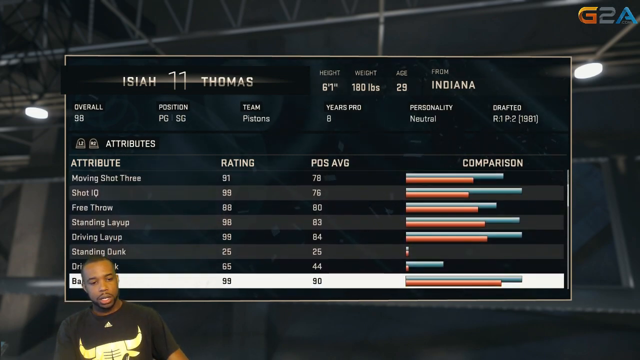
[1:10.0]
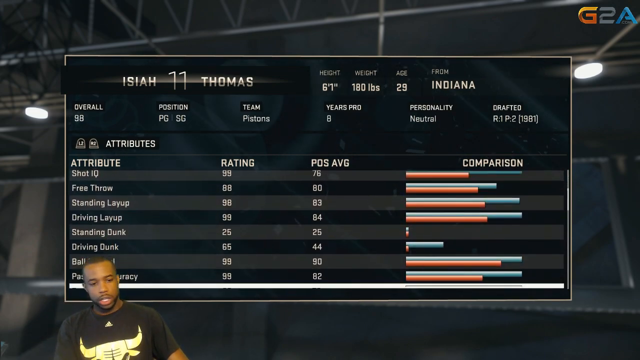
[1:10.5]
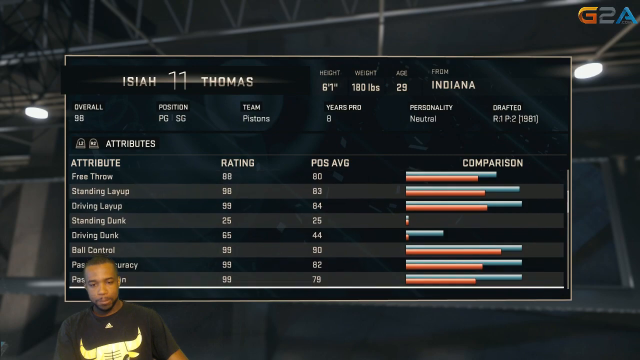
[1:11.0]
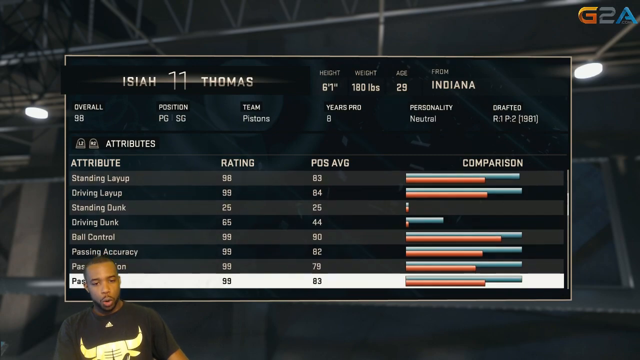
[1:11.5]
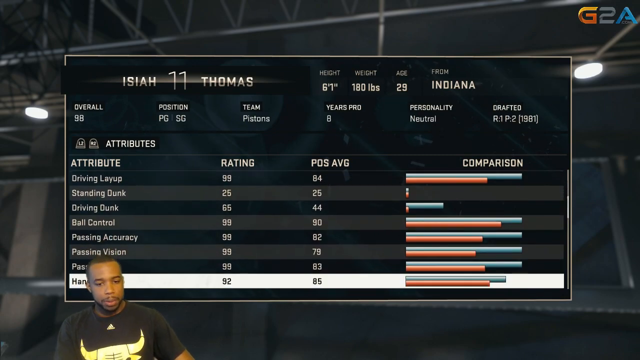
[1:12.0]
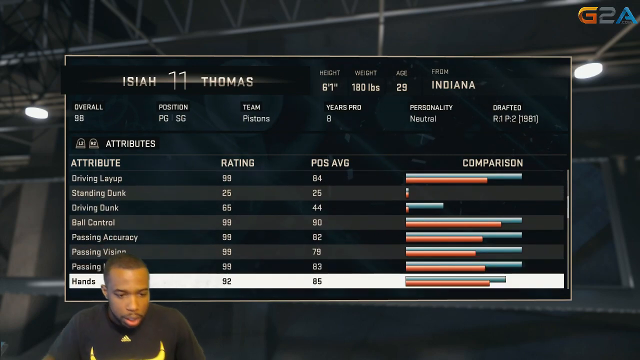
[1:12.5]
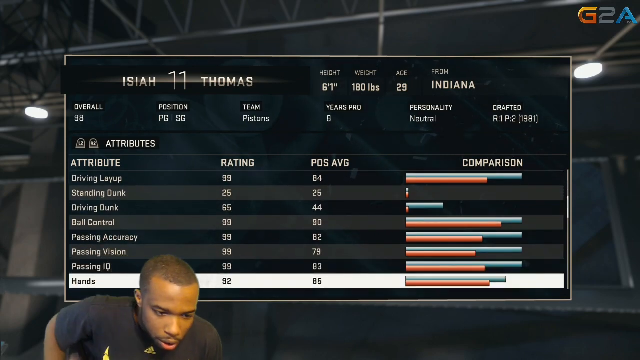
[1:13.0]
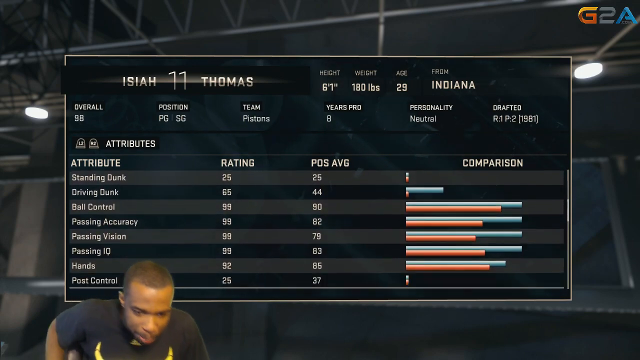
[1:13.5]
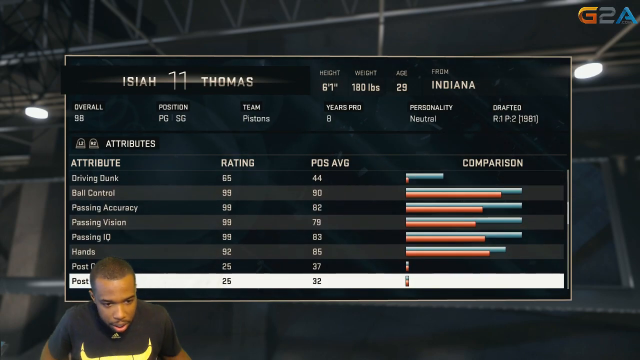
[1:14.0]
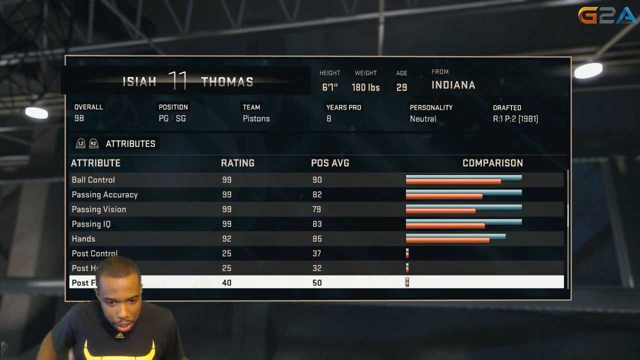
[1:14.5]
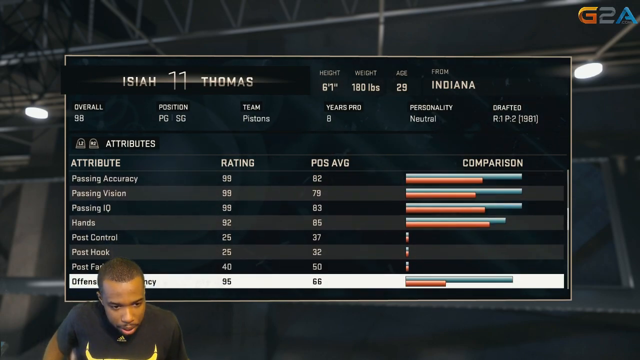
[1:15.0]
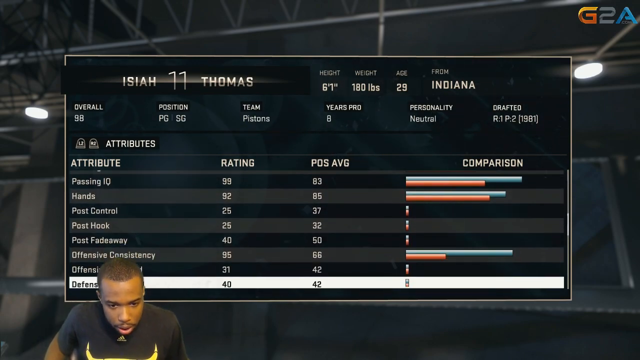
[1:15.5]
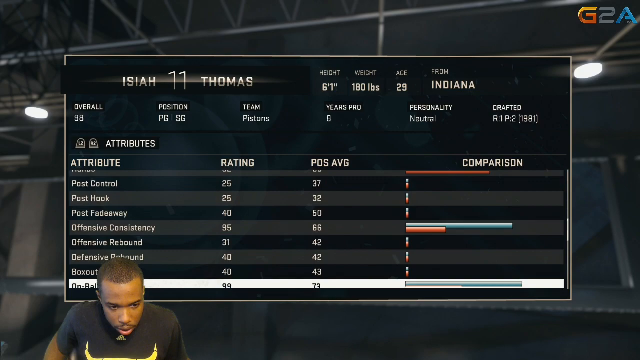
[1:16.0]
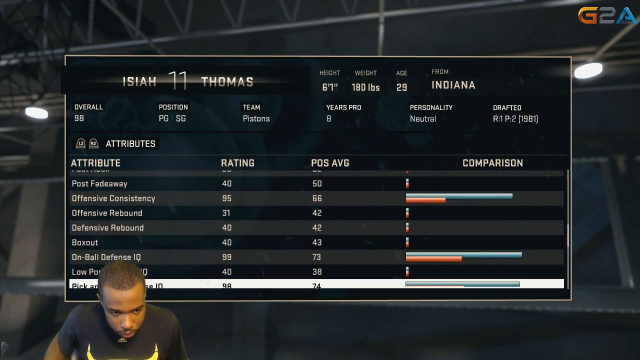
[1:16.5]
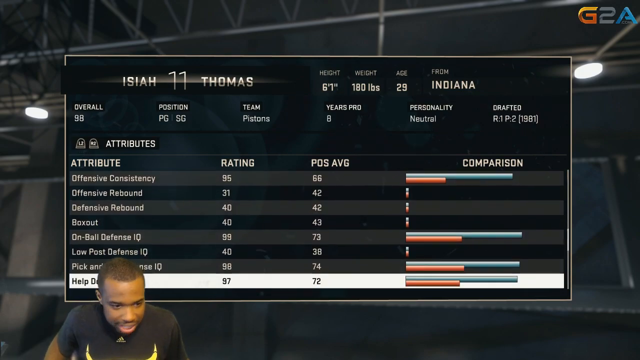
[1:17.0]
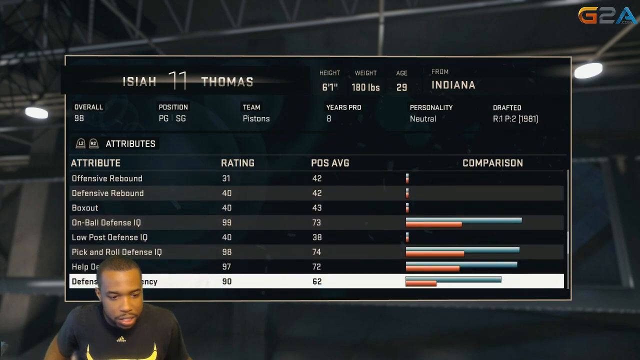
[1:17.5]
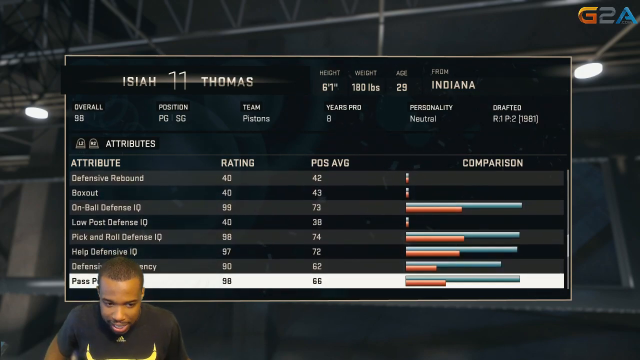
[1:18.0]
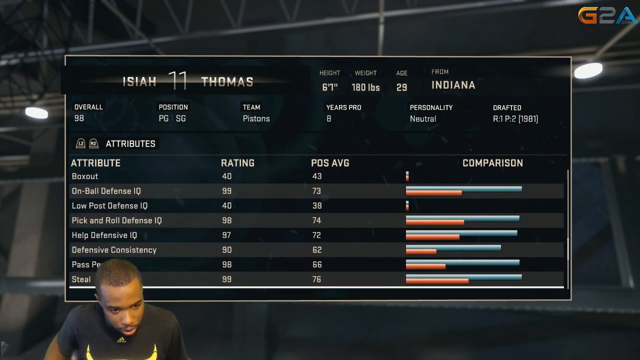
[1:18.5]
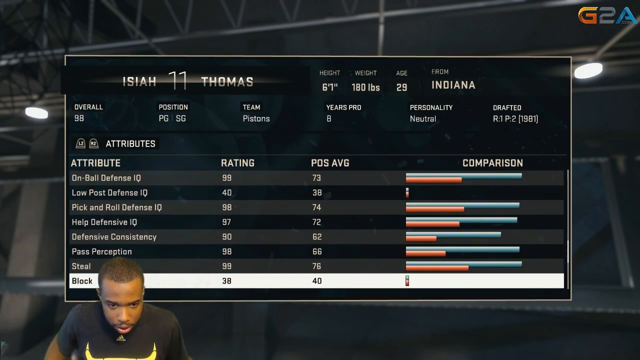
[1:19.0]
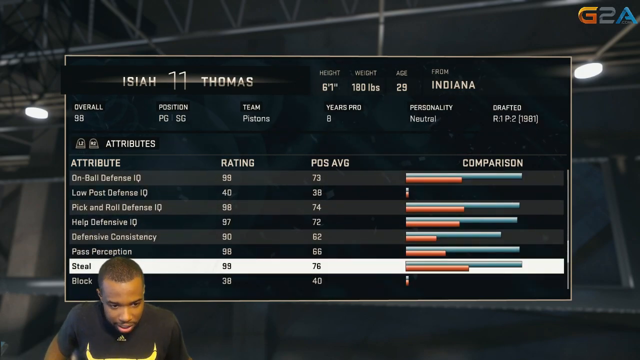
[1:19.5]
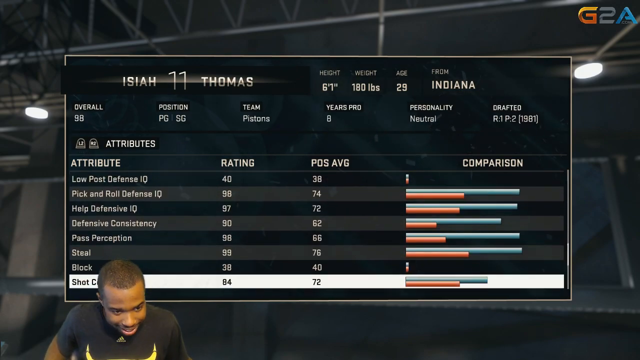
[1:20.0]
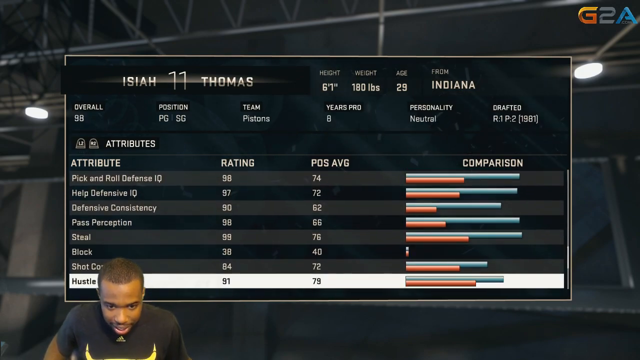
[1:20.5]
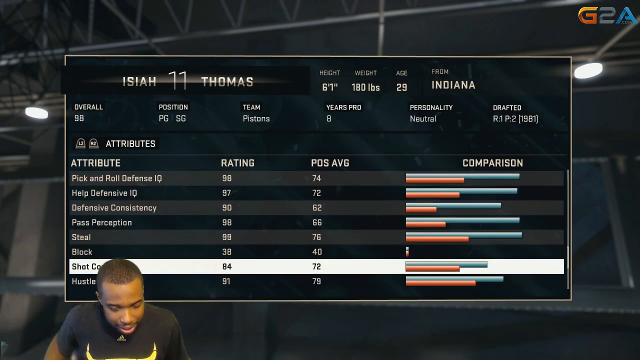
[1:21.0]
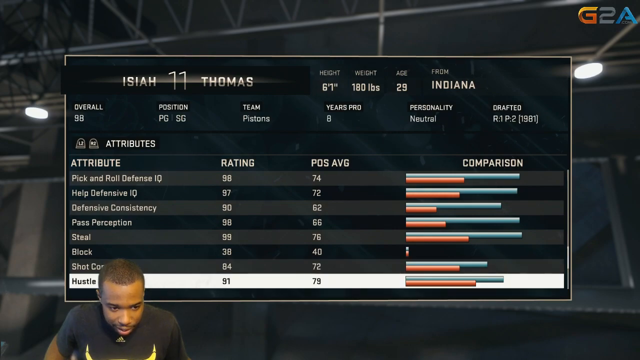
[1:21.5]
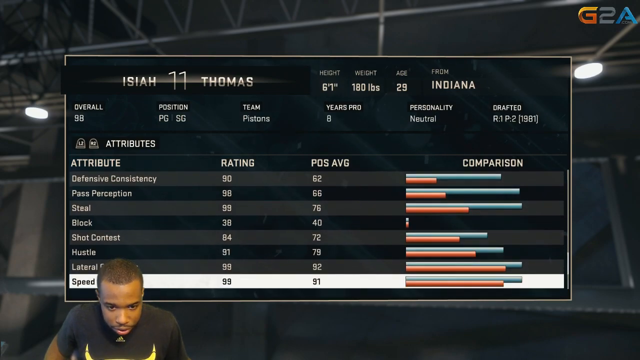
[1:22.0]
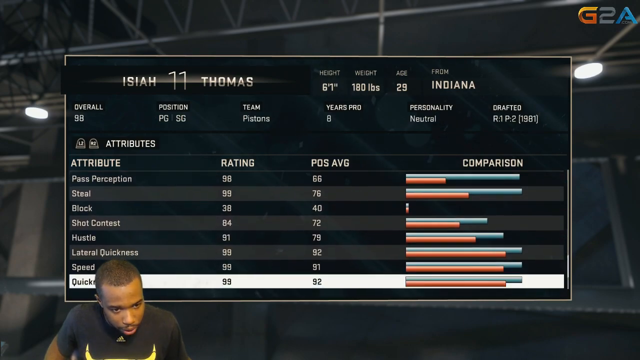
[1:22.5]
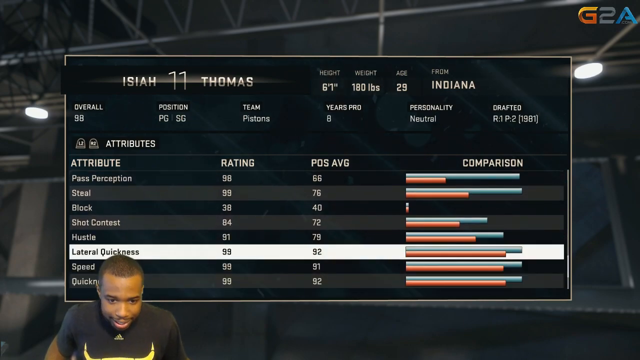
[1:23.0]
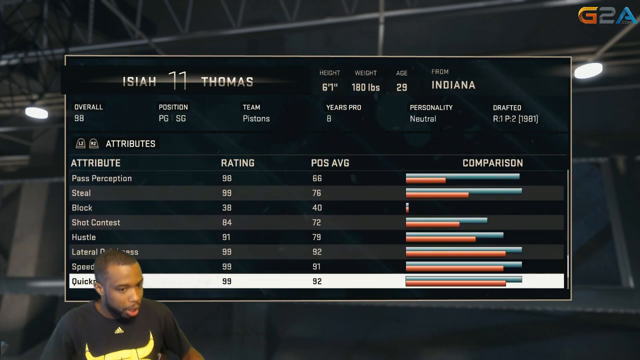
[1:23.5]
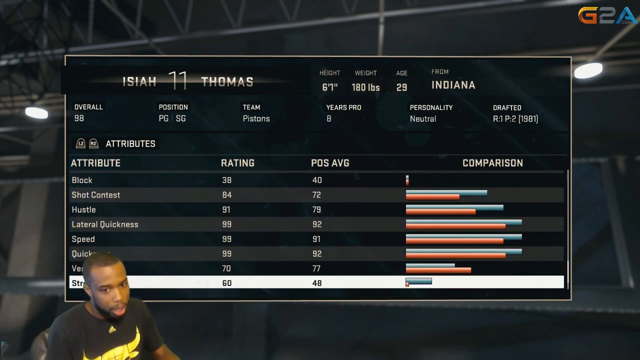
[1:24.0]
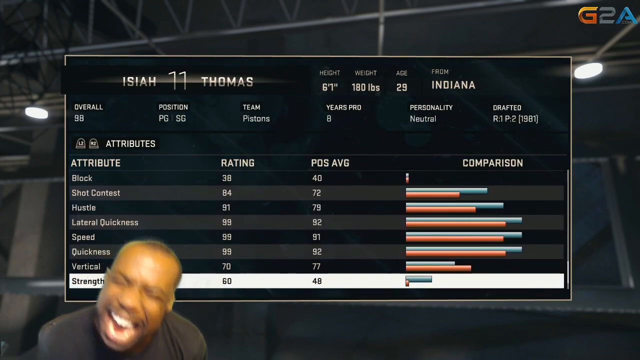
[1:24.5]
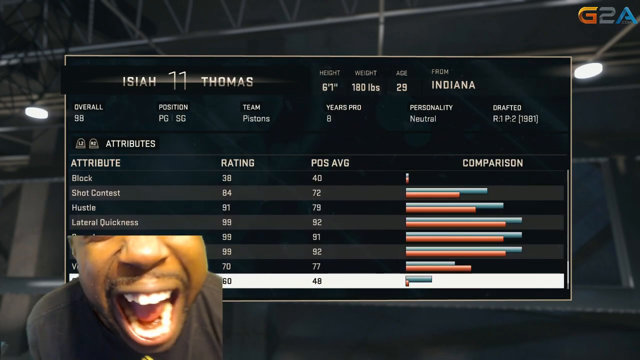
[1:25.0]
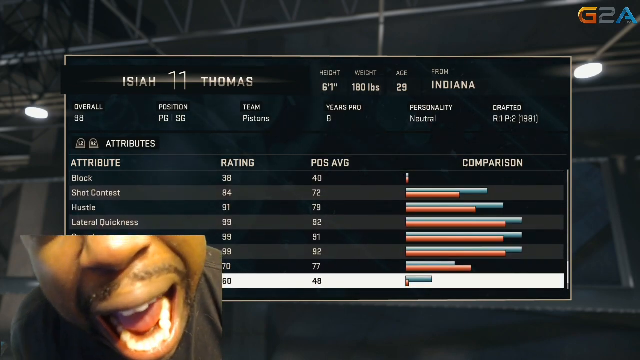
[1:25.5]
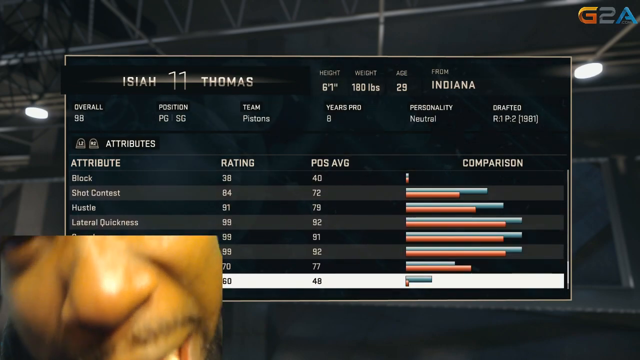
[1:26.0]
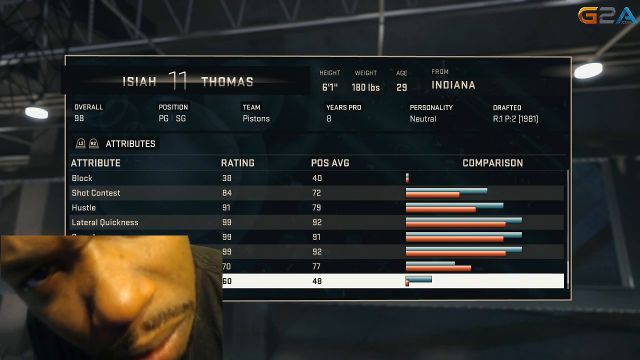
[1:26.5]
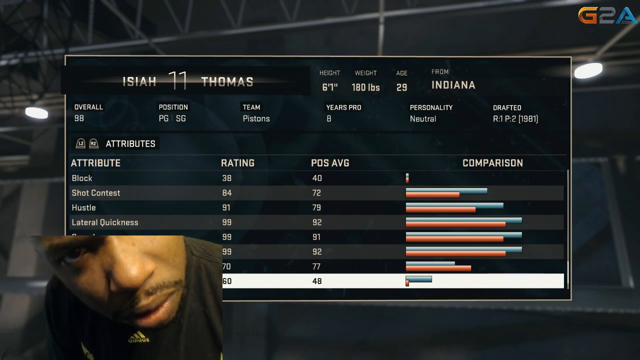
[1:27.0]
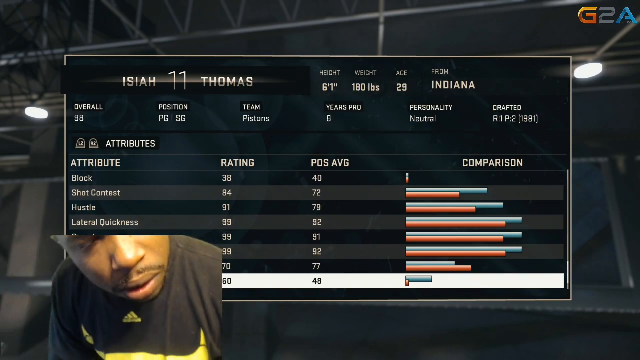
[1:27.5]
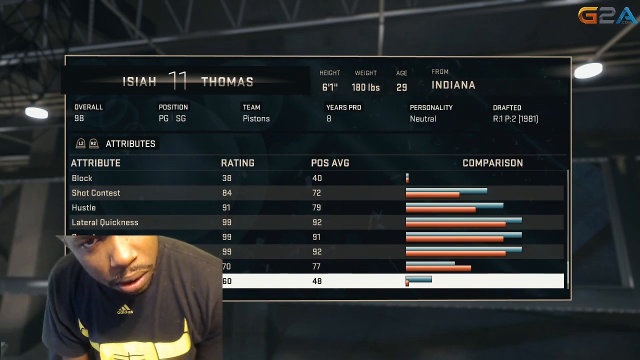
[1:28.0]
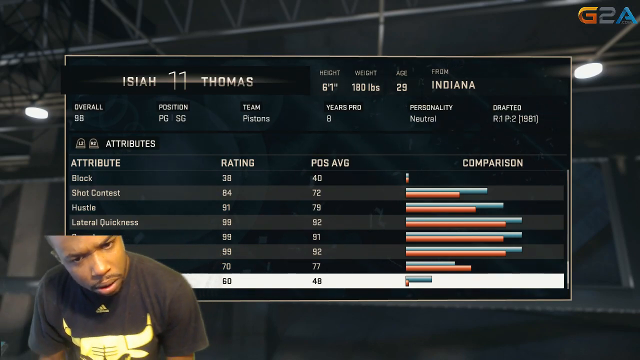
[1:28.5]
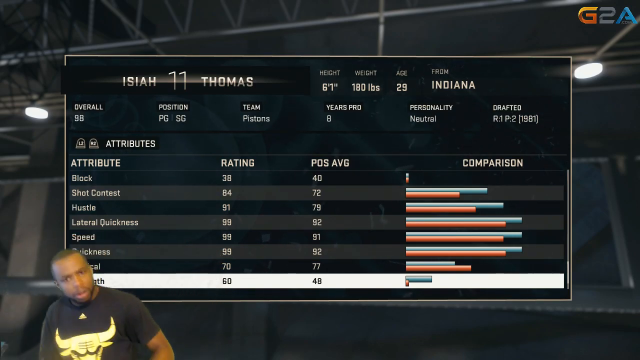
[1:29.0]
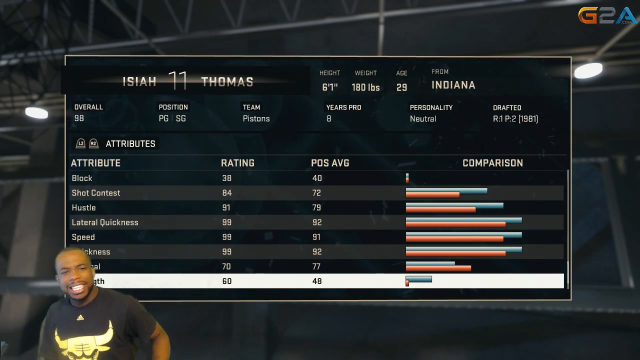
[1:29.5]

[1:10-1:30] The specific statistics for Isaiah Thomas remain on screen, each attribute having a rating shown relative to the position average. More statistics scroll across the screen, such as driving dunk, ball control, passing accuracy, passing vision, passing IQ and hands. The man reads from a script in front of him and is having fun with his narration. More statistics for Thomas appear: on-ball defense IQ, low post defense IQ, pick and roll defense IQ, help defensive IQ, defensive consistency, pass perception, steals and blocks. The man then screams into the camera, and the view goes into his mouth, showing his teeth and a tongue that appears quite moist.